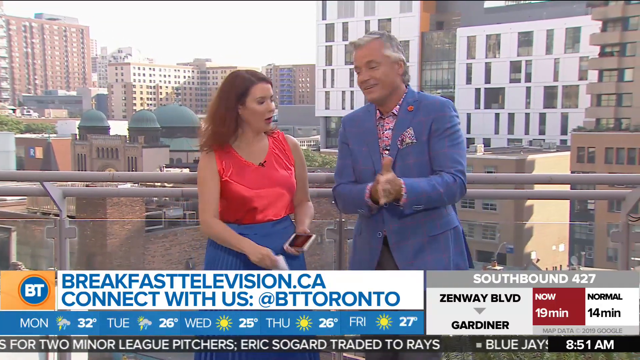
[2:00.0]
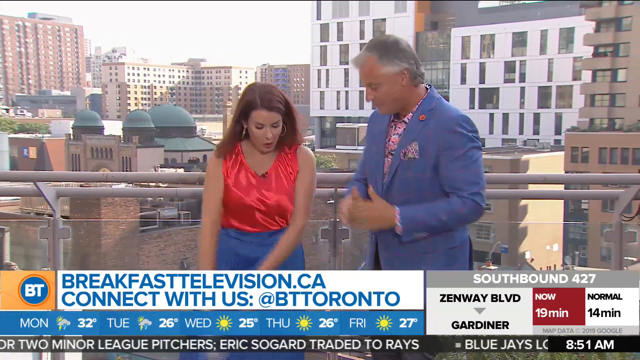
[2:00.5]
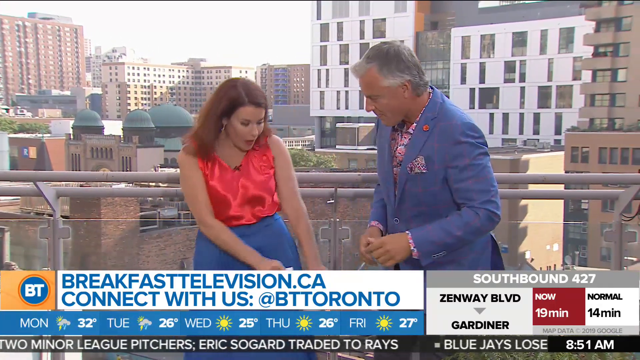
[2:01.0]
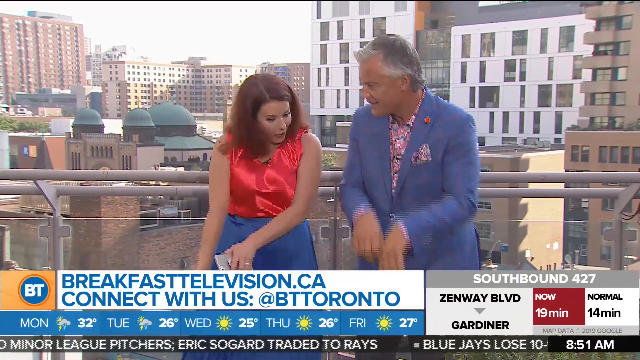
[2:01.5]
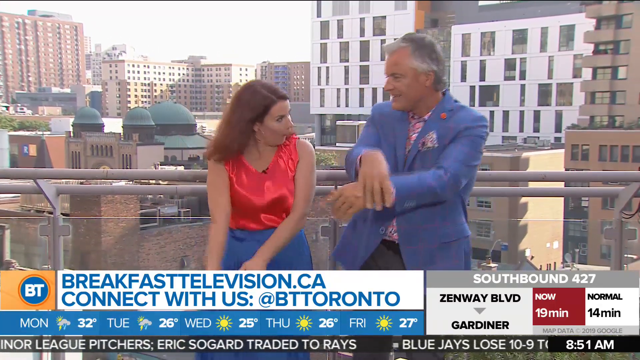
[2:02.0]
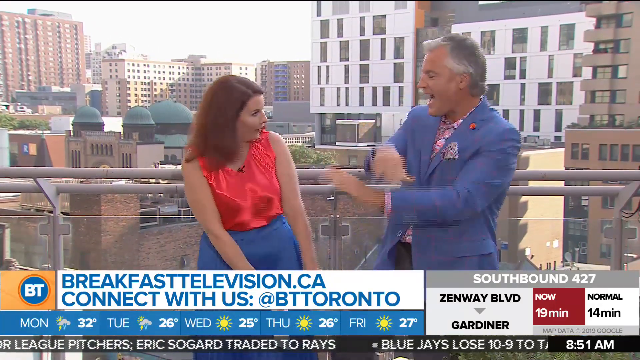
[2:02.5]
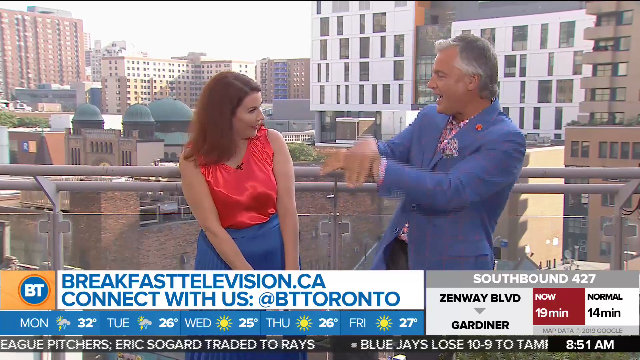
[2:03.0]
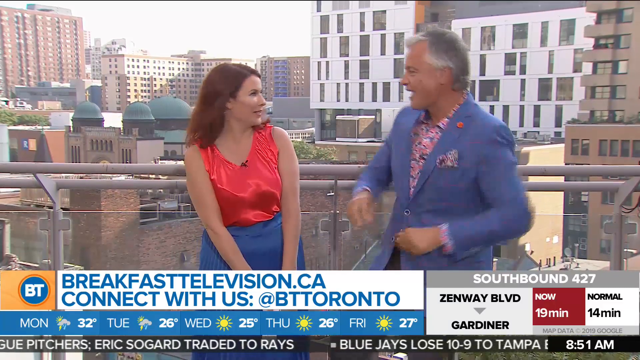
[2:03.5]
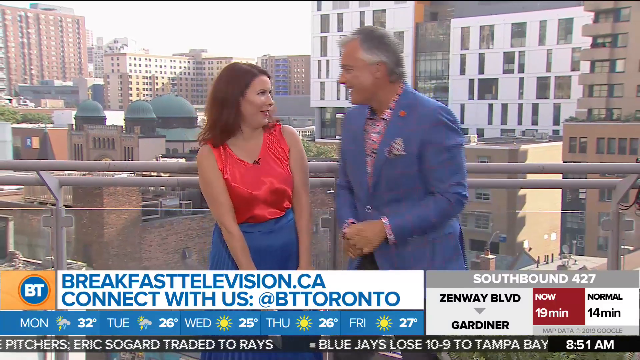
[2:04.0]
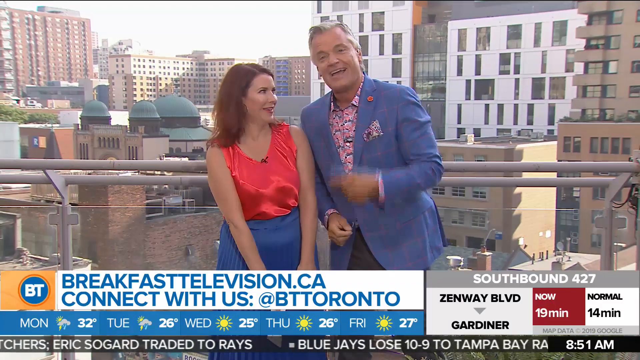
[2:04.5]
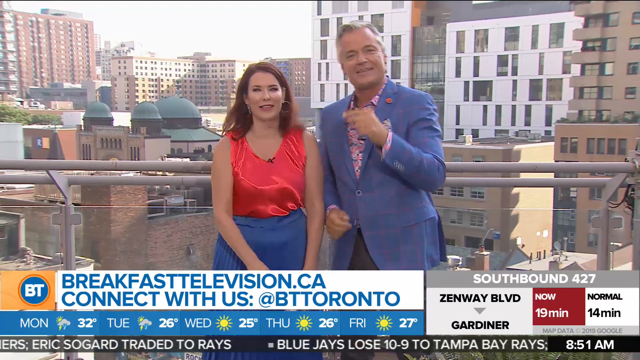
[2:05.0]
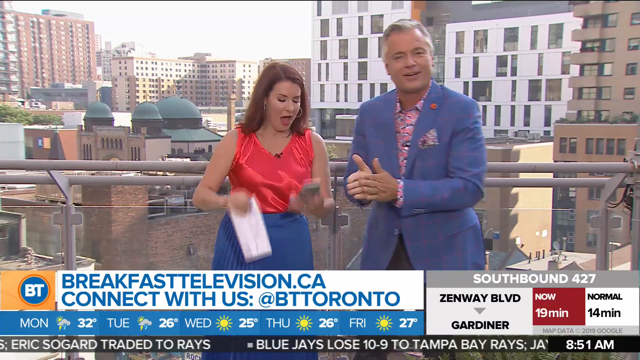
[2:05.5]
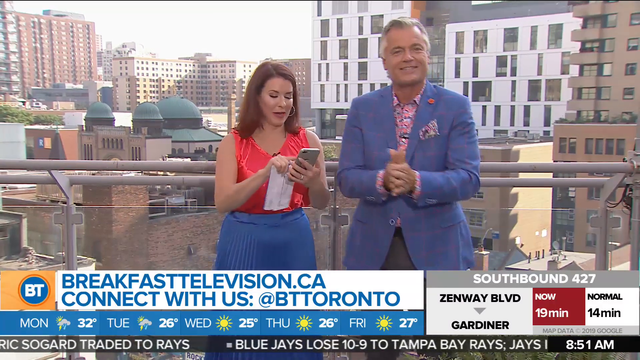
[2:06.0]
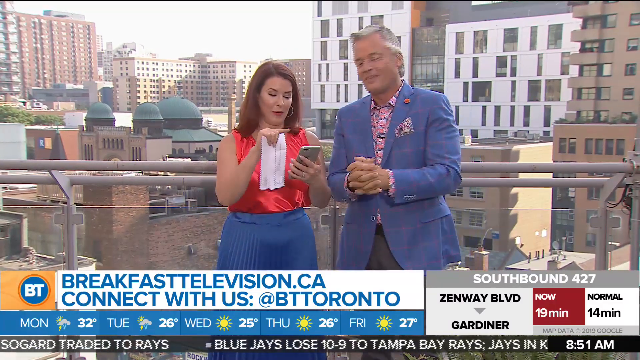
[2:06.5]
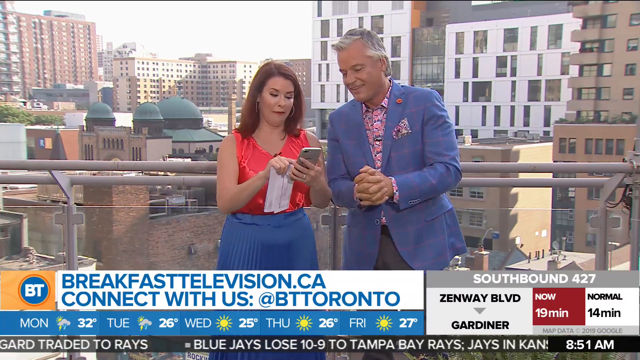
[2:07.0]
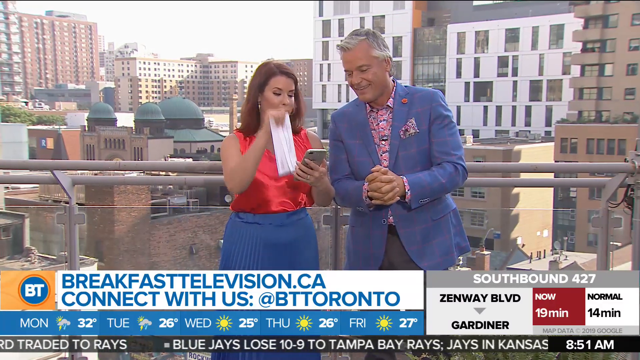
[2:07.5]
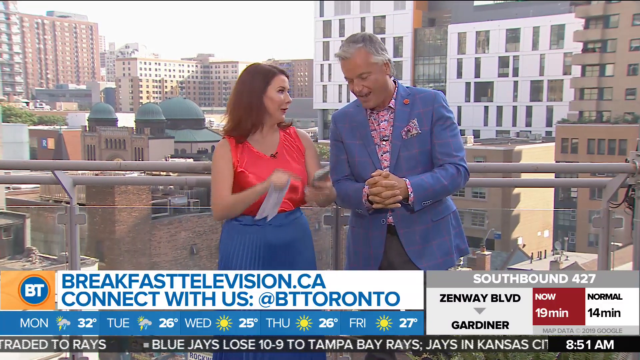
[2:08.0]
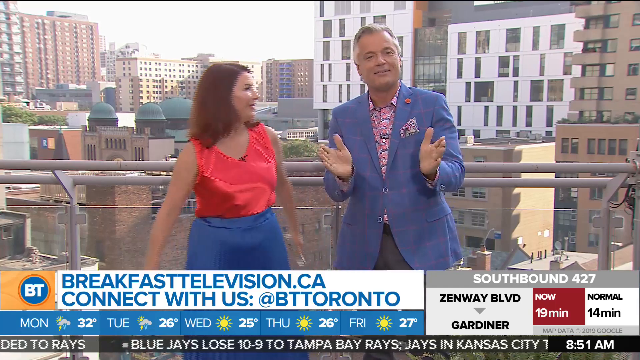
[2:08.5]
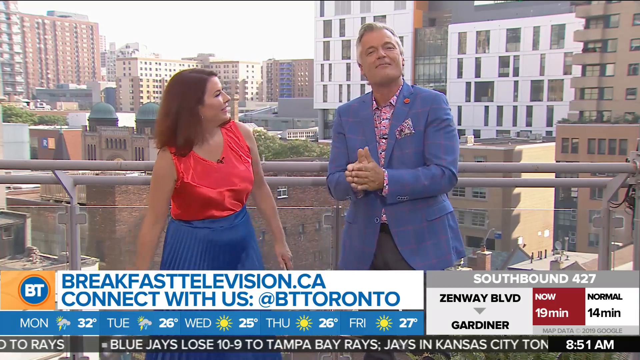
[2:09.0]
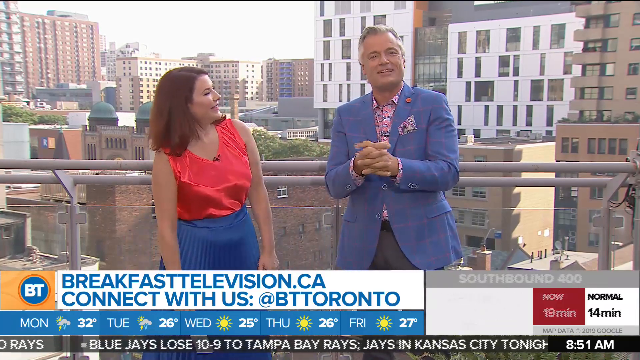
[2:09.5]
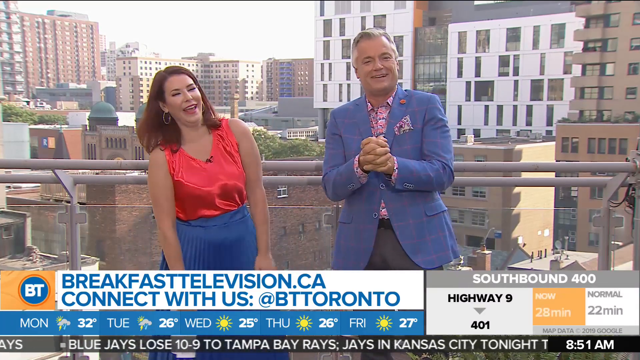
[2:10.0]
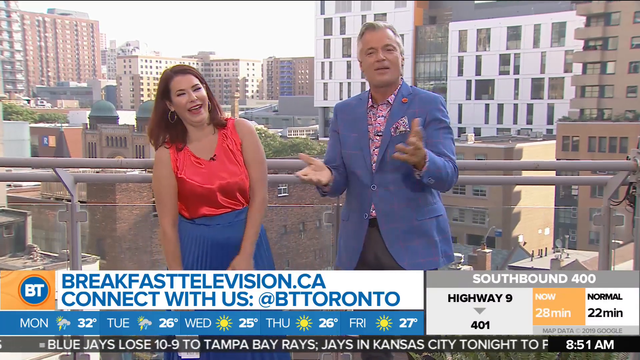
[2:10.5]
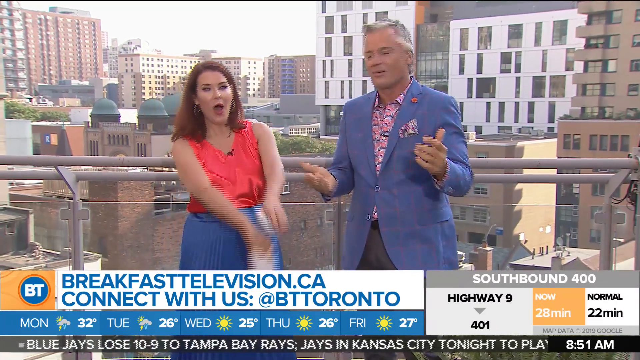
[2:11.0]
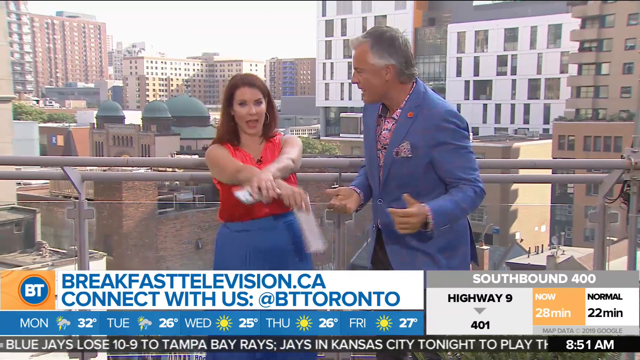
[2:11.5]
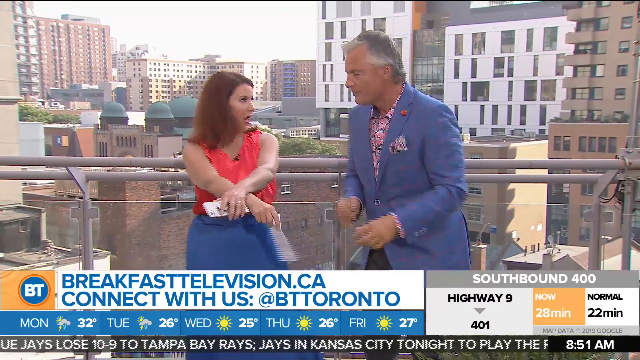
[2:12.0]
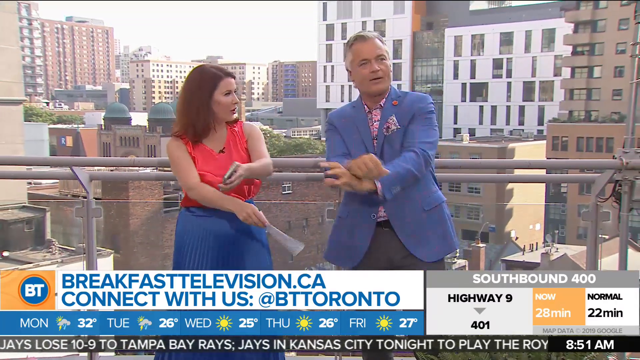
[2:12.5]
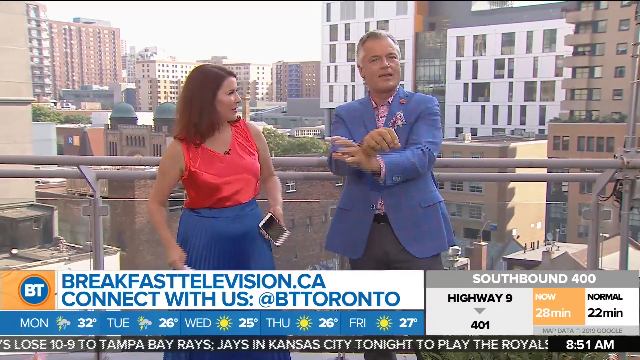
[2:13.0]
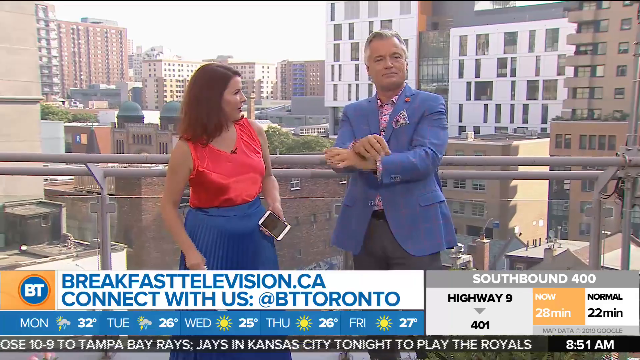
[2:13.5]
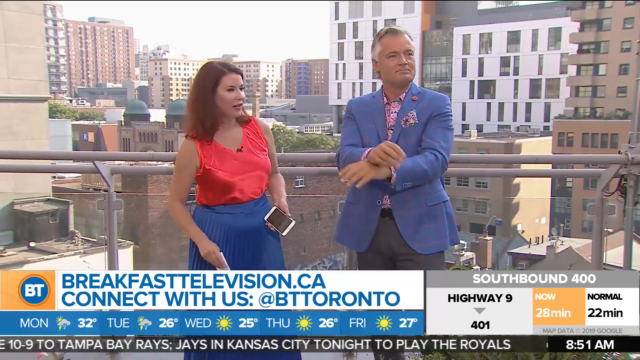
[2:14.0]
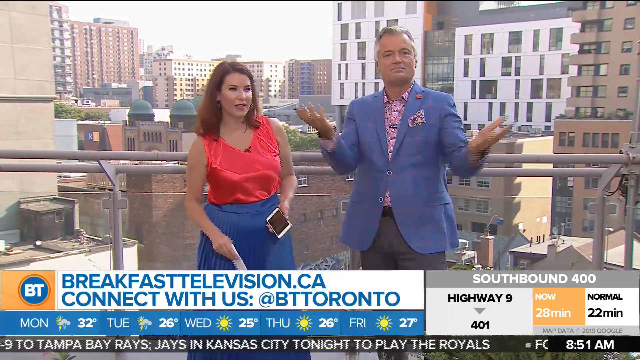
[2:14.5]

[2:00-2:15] The woman tries a slightly different dance, apparently another part of the Gangnam Style dance, in which she puts her hands down and moves side to side. She appears to have turned off the song on her mobile phone. The hosts continue to dance while looking off camera, seemingly wrapping up the segment, possibly before going to commercial.